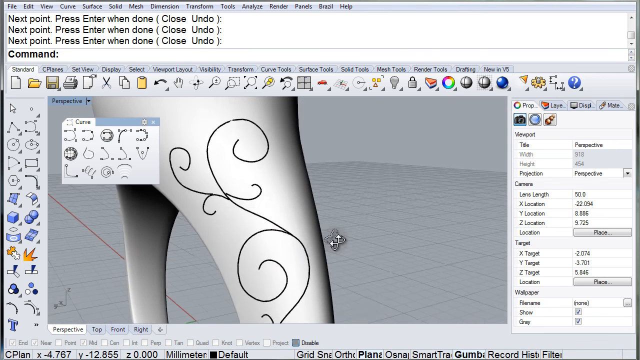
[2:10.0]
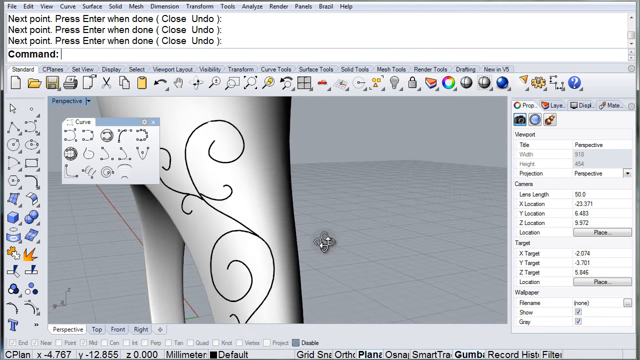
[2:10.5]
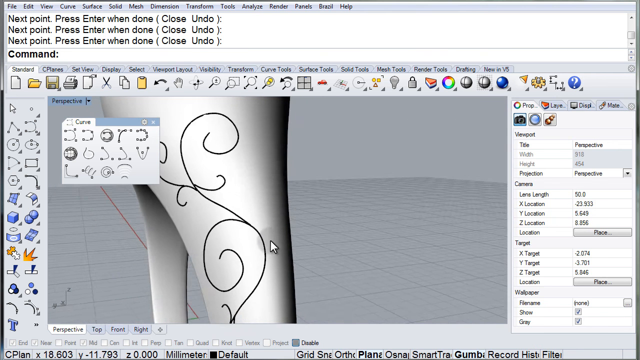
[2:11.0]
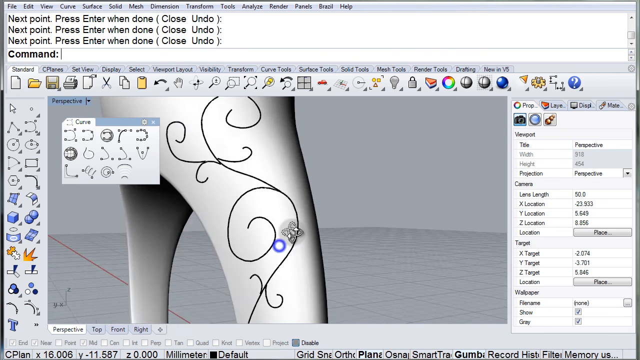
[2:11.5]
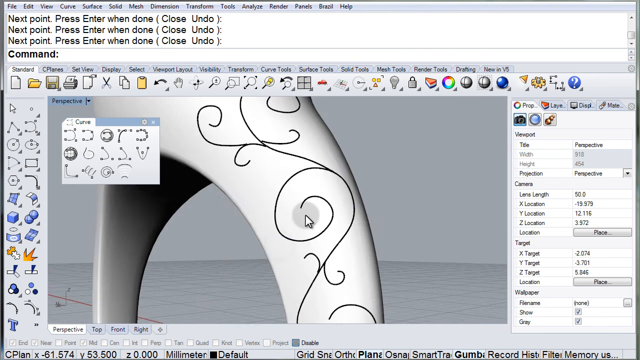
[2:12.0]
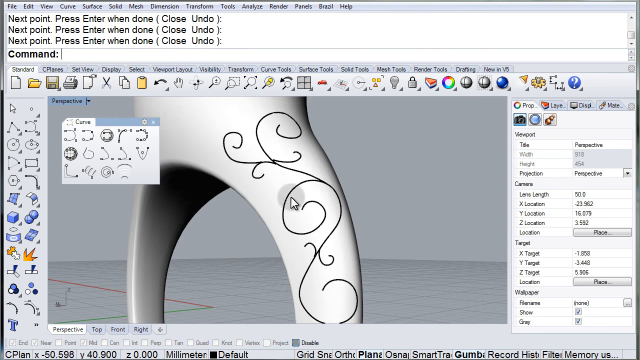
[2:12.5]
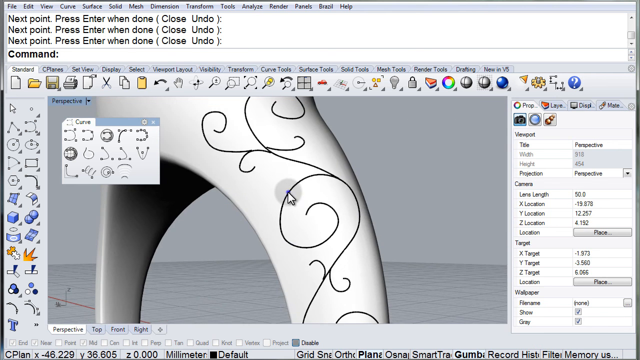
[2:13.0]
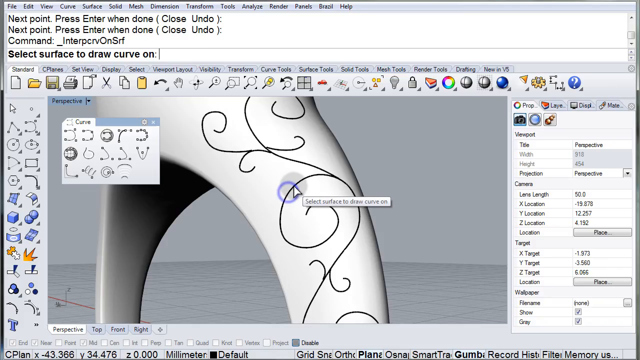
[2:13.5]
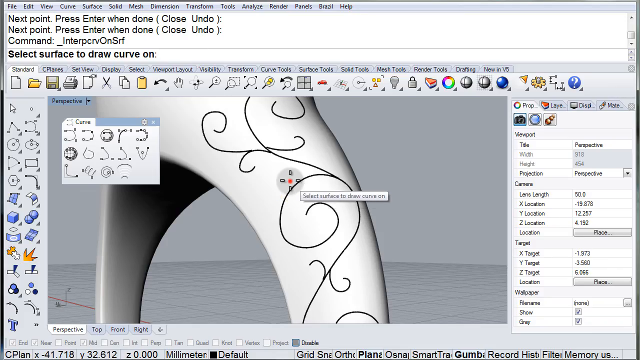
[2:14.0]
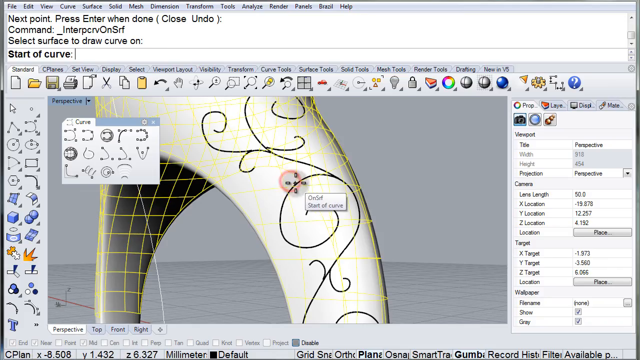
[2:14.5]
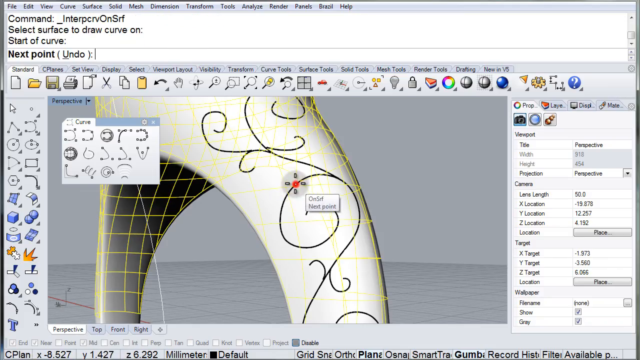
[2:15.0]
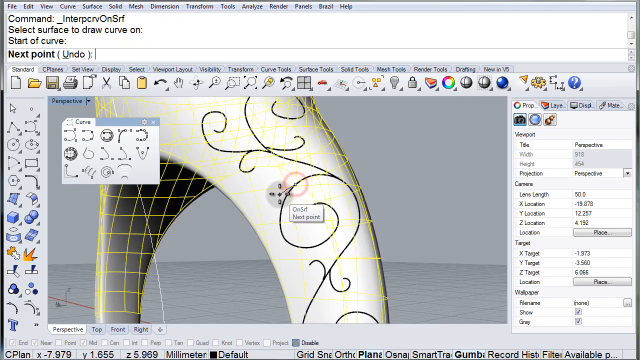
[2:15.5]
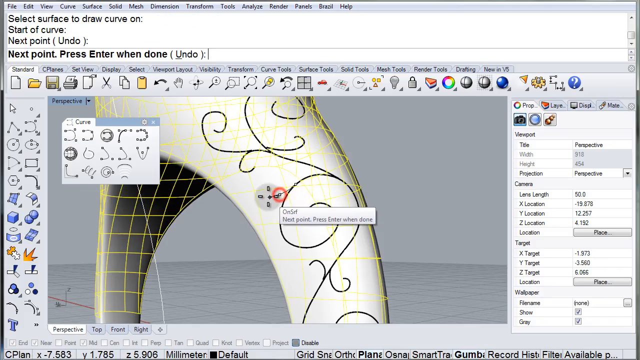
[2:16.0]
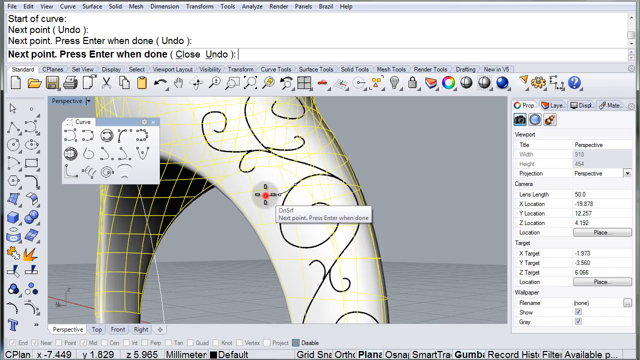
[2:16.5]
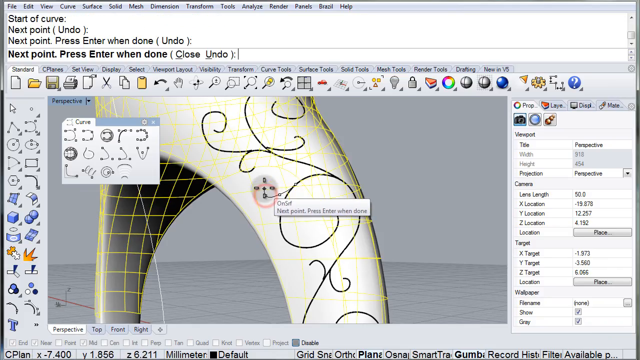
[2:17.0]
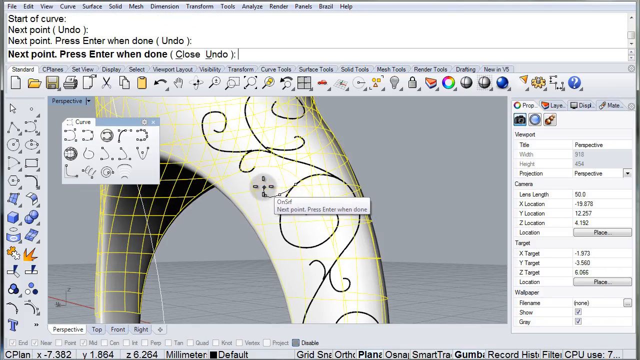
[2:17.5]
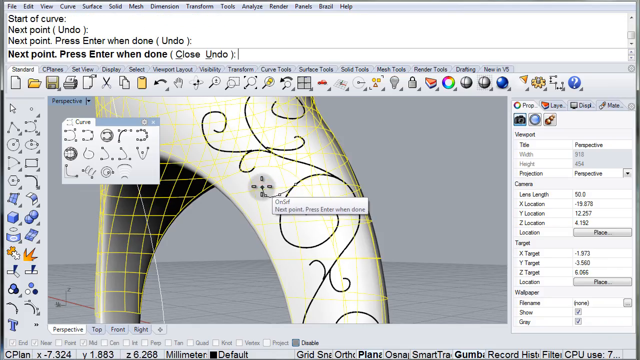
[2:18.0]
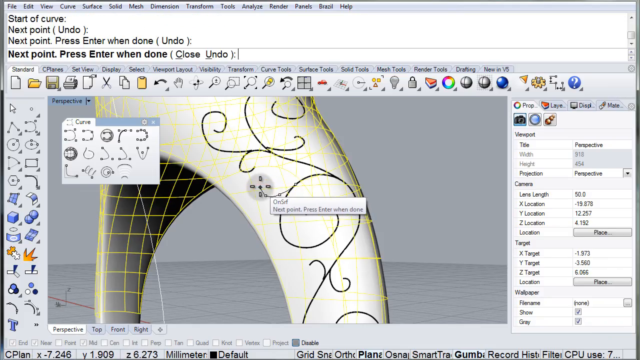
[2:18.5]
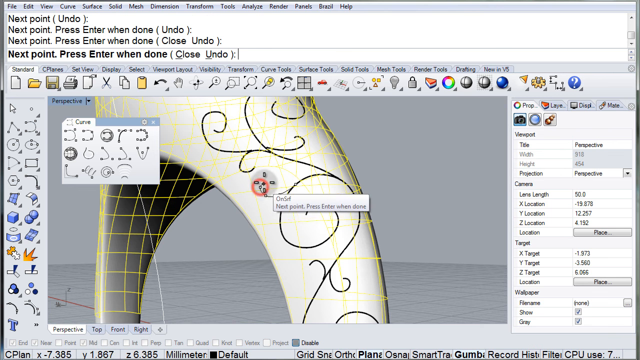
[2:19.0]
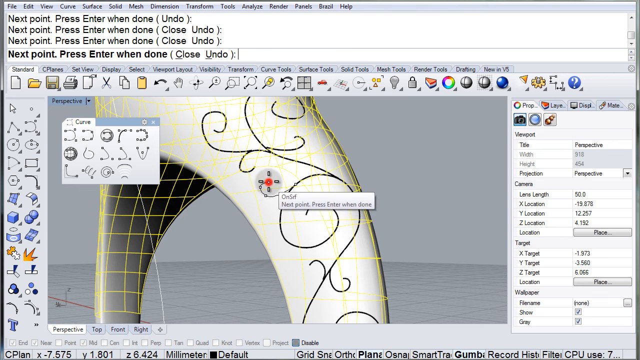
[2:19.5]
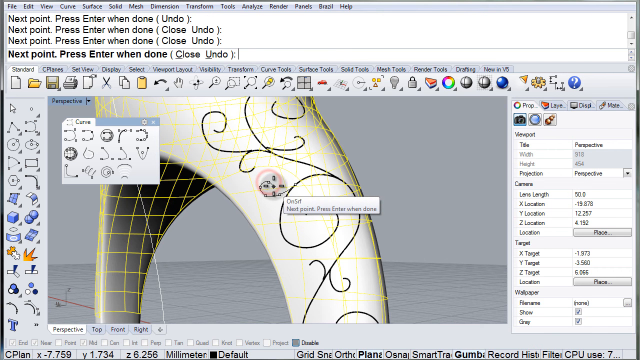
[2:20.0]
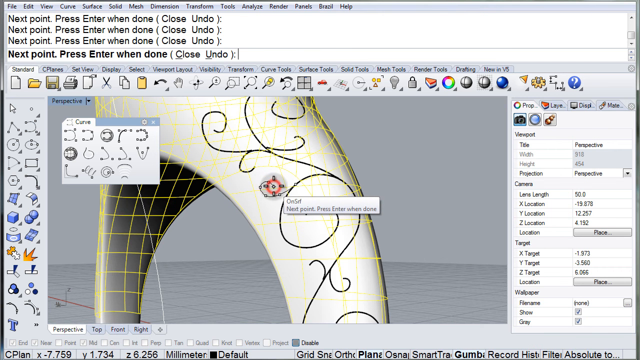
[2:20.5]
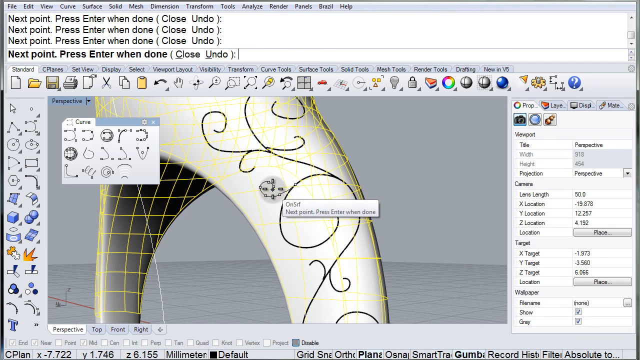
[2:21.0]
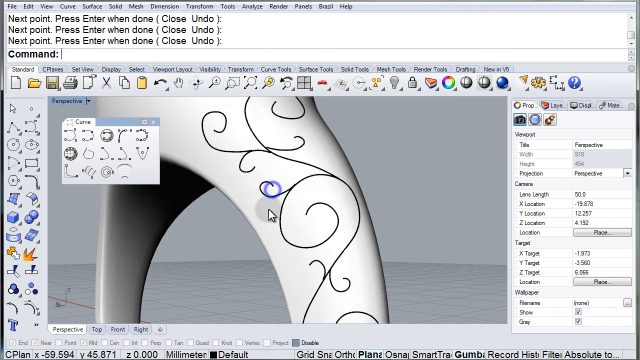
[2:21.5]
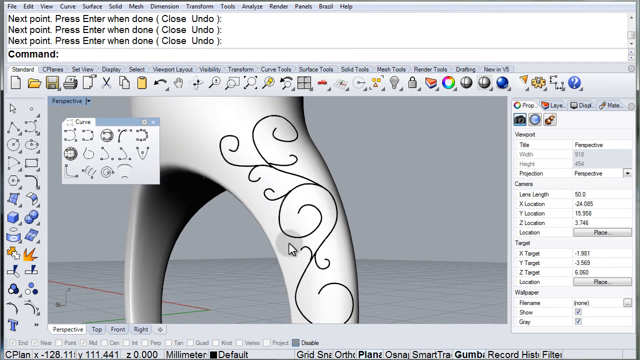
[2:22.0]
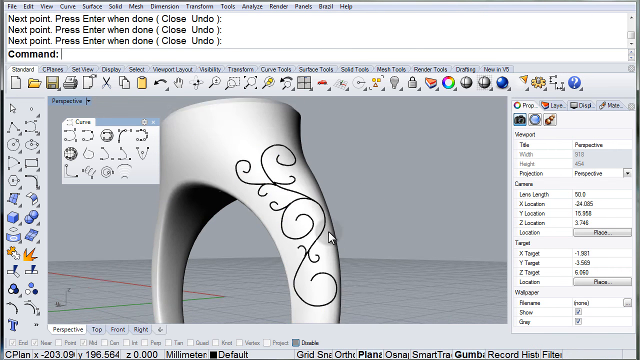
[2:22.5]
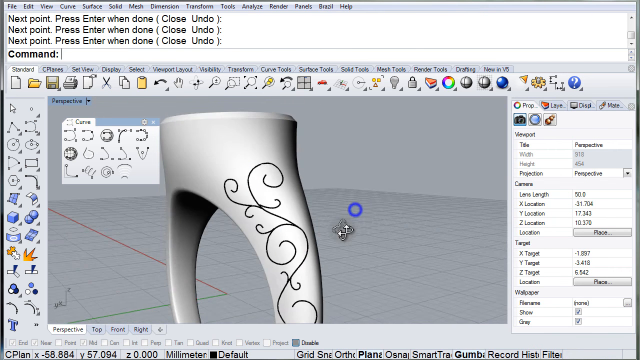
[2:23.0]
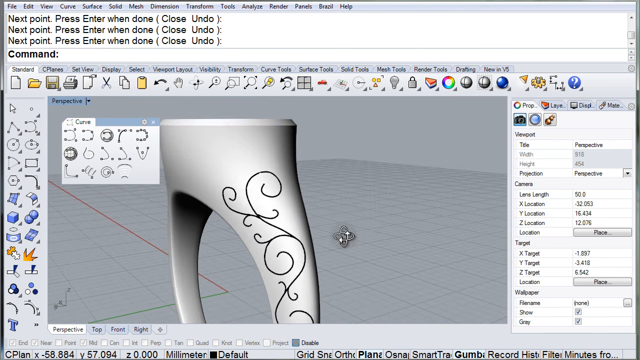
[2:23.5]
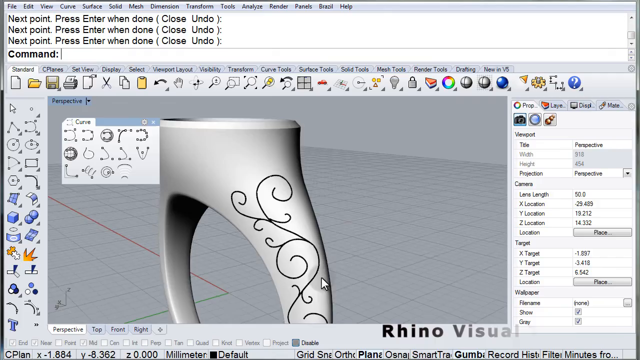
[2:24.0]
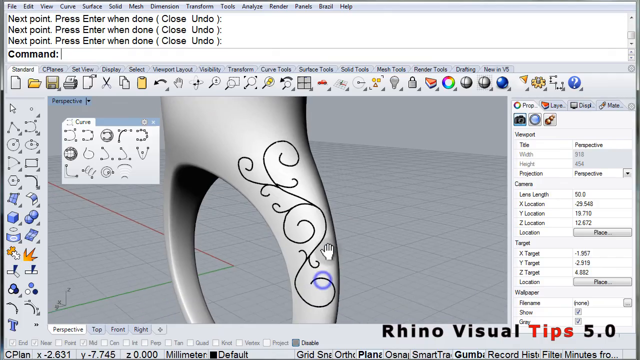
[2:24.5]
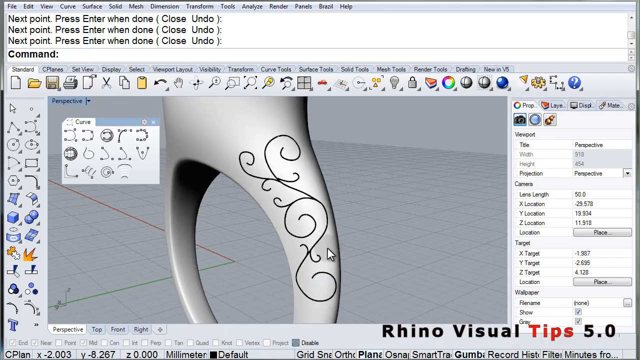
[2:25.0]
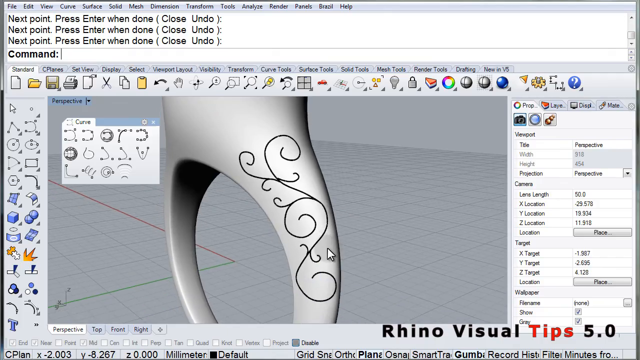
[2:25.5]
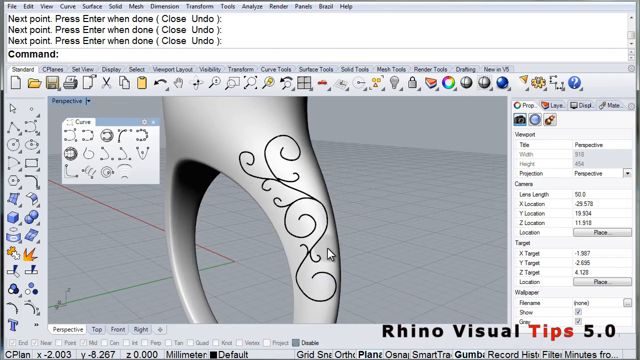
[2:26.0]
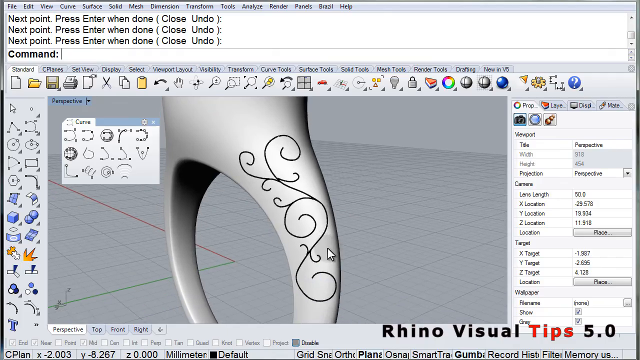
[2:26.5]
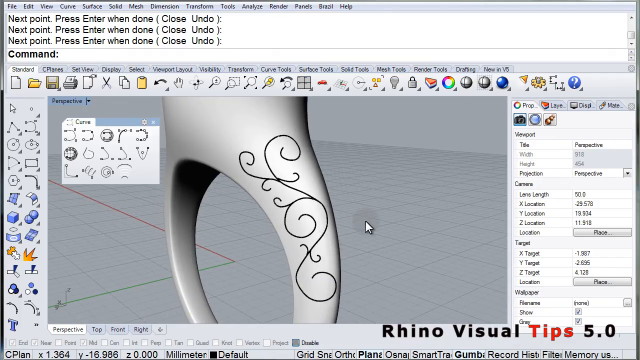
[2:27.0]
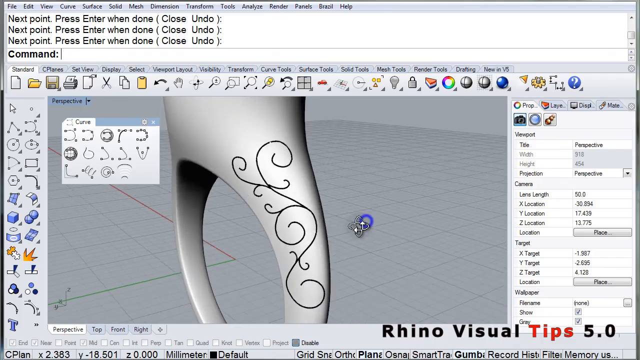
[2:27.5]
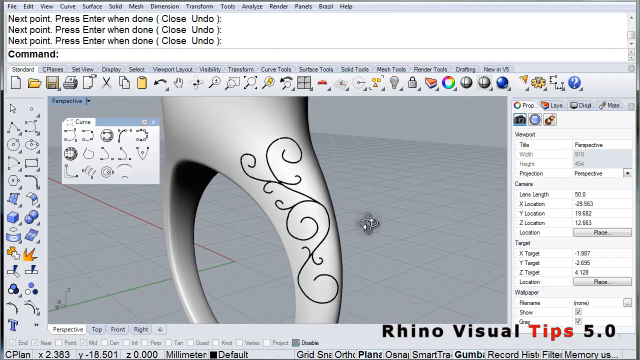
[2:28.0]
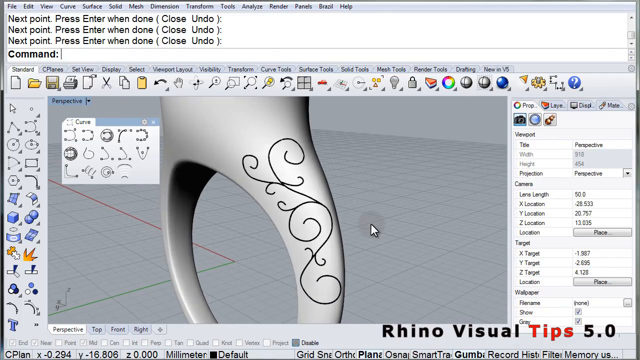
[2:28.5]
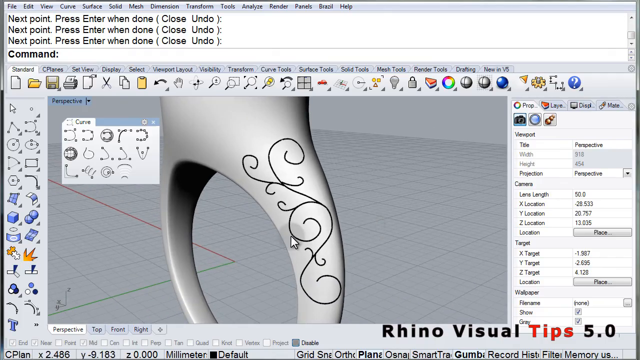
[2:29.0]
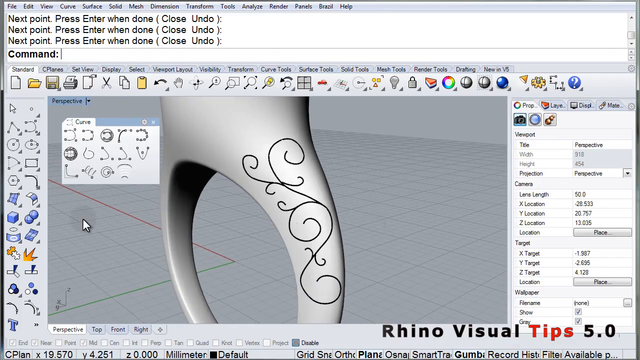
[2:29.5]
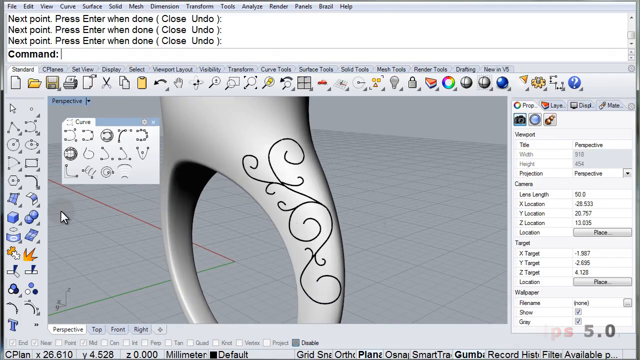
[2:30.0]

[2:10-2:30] The mouse clicks and drags in the background rather than on the ring itself, so the view zooms out a little and the design drawn on the ring is shown from several different angles as the ring moves around in space. The view zooms in very far, and the mouse clicks again to draw a final little curlicue going up and toward the left, with the yellow grid pattern in the background and text commands appearing at the top. The view then zooms out, and the mouse moves up and down so the ring shifts up and down on the screen and all around, showing the whole complicated spiral design of intersecting and branching curlicues on one side of the ring. While the mouse is clicking in the background, moving the ring around and pointing out features of the curlicues, nothing happens in the text box at the top.